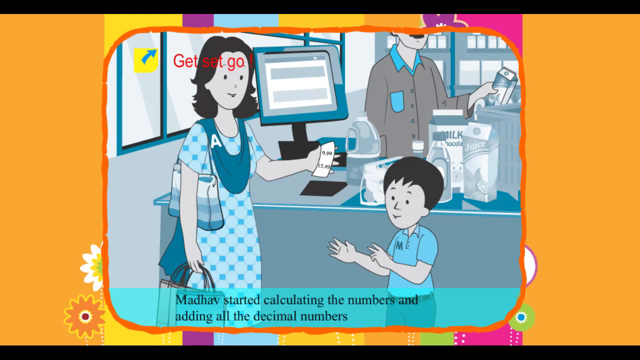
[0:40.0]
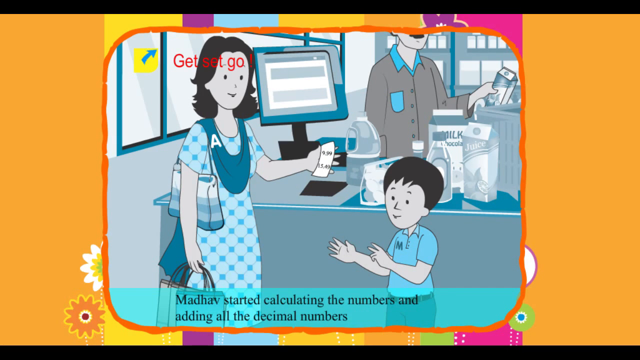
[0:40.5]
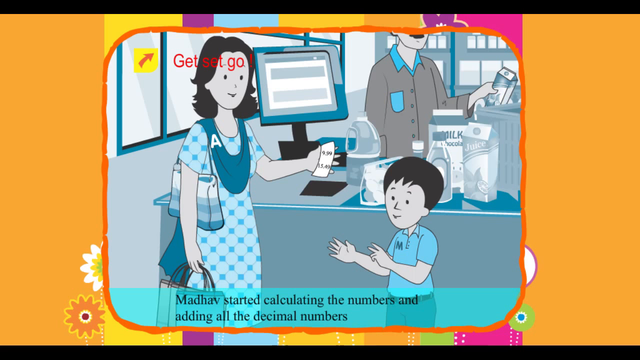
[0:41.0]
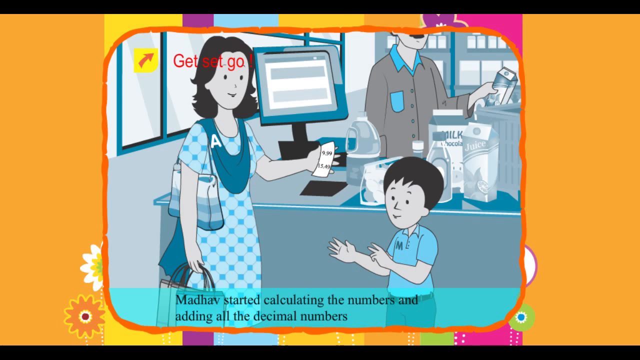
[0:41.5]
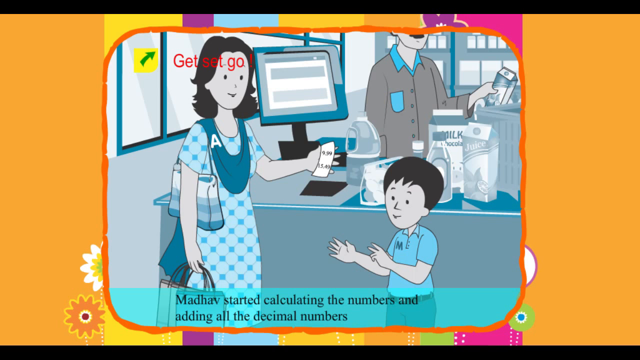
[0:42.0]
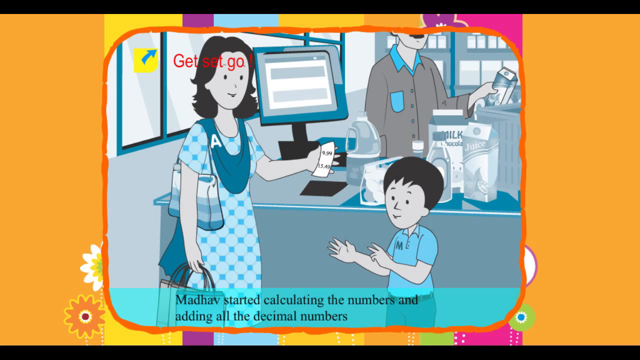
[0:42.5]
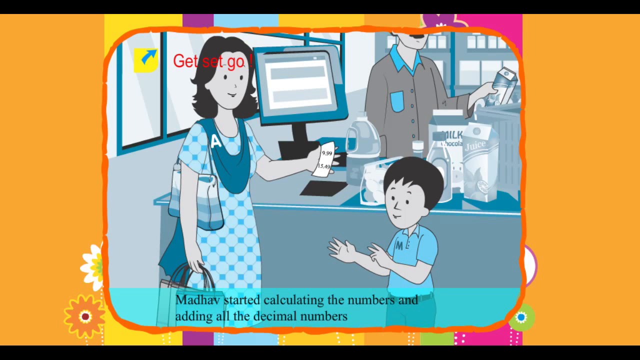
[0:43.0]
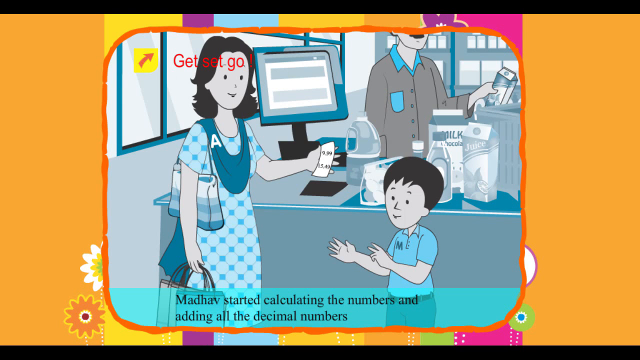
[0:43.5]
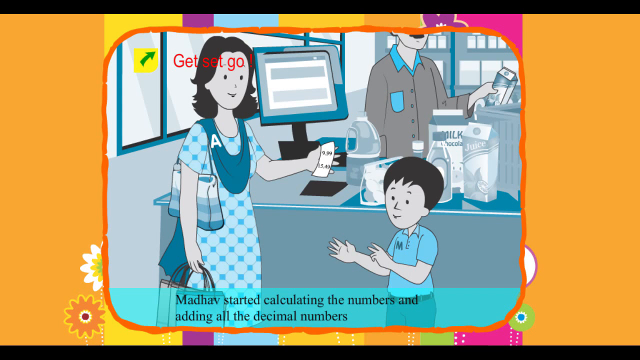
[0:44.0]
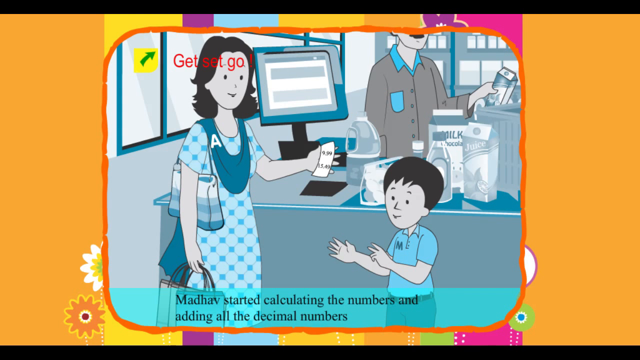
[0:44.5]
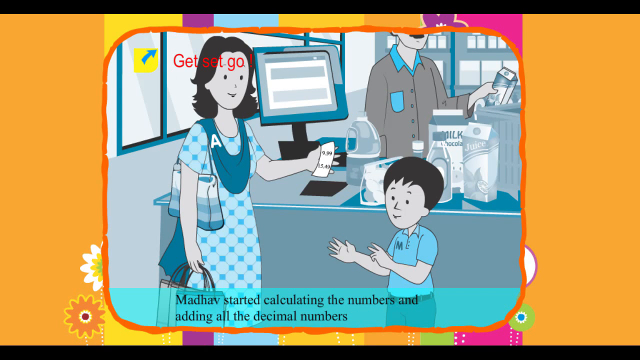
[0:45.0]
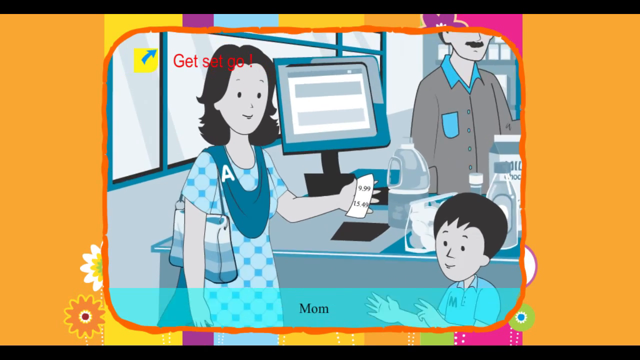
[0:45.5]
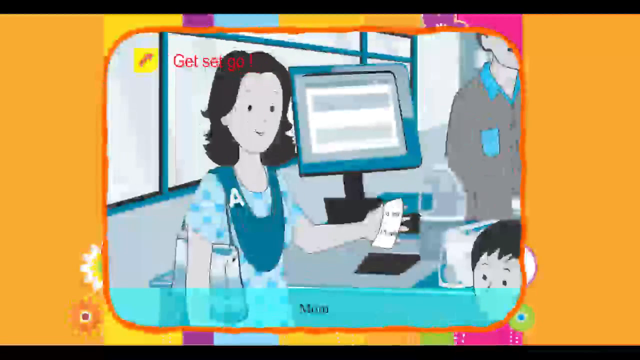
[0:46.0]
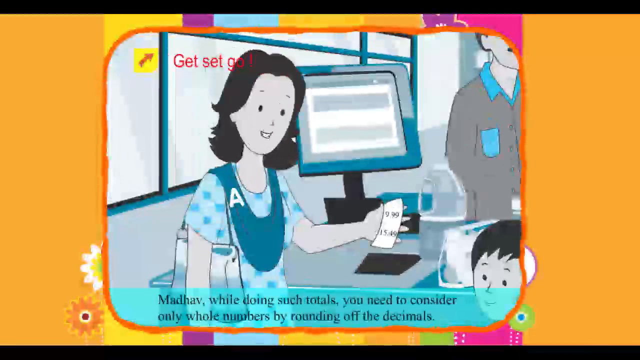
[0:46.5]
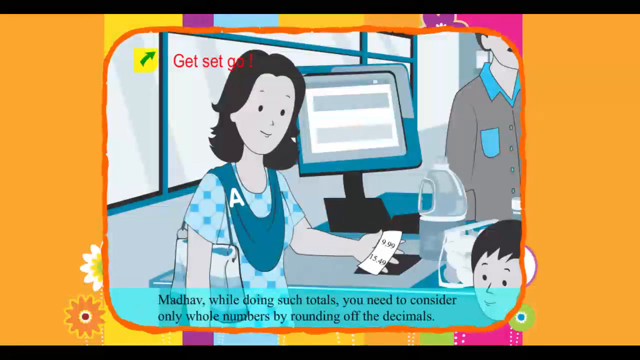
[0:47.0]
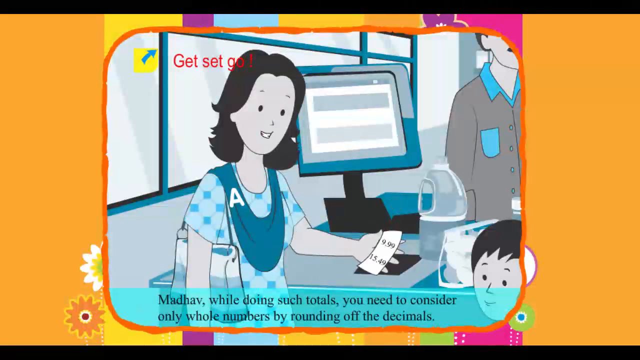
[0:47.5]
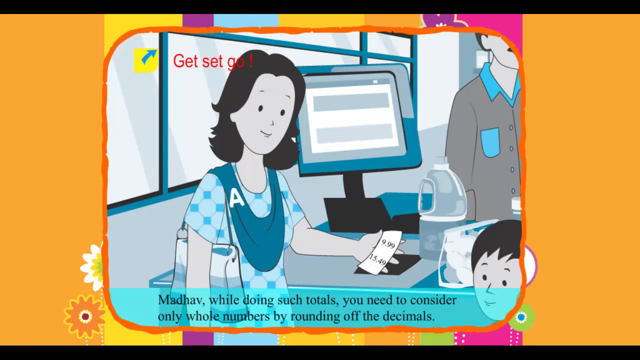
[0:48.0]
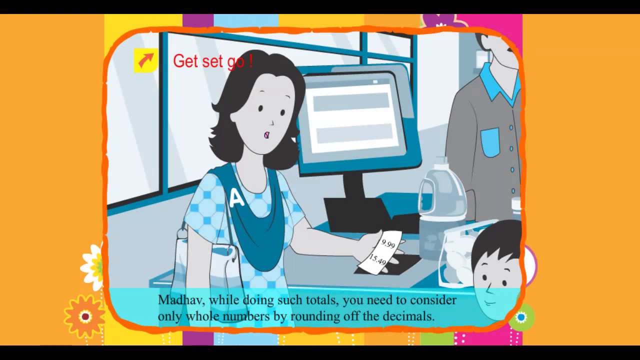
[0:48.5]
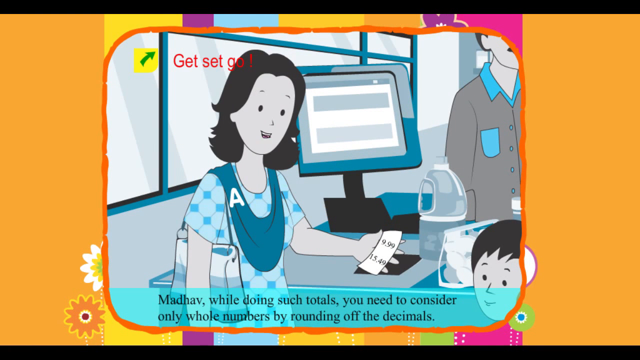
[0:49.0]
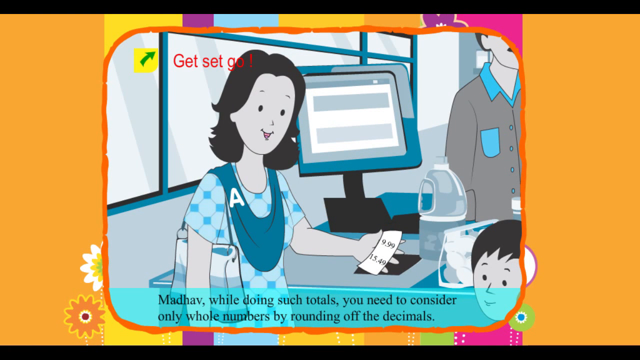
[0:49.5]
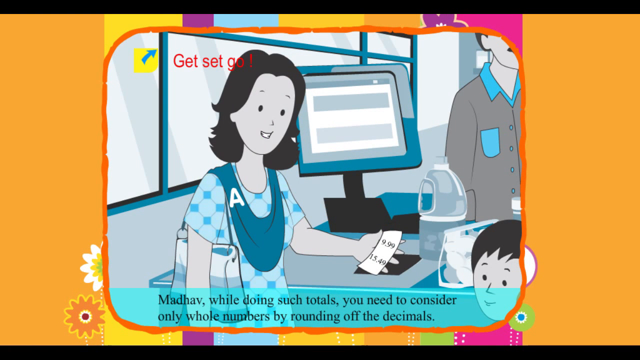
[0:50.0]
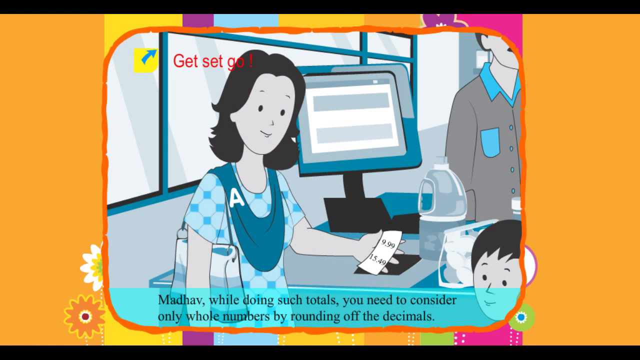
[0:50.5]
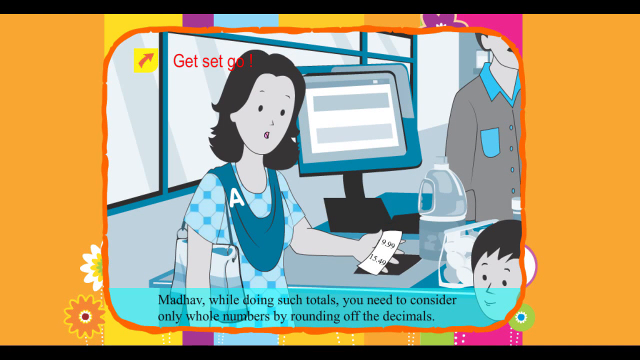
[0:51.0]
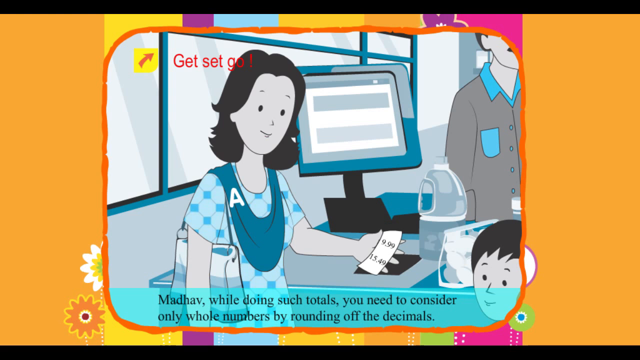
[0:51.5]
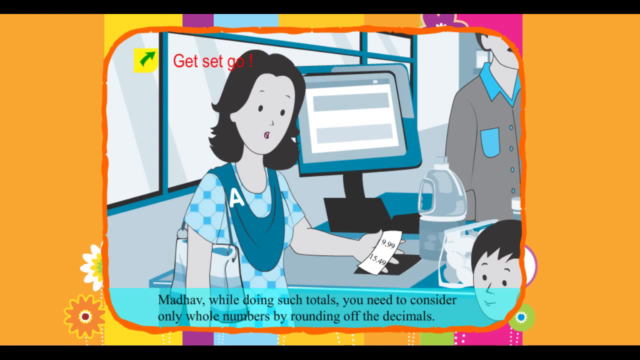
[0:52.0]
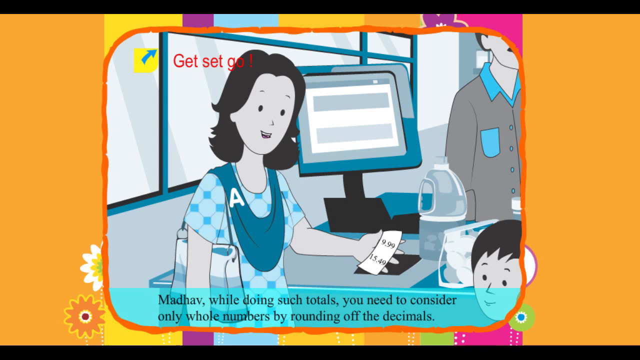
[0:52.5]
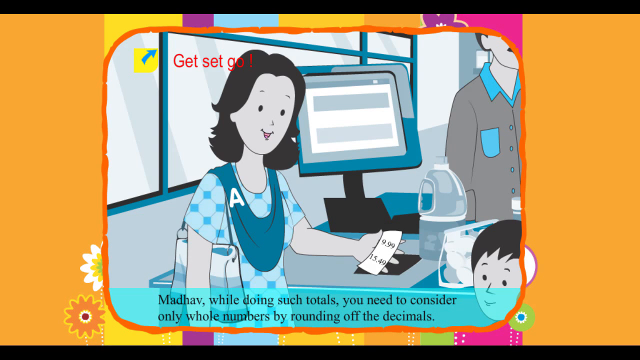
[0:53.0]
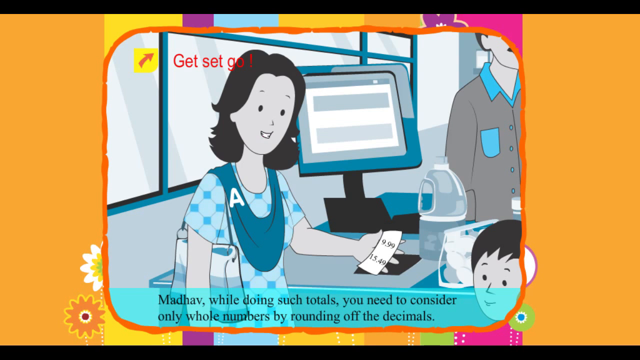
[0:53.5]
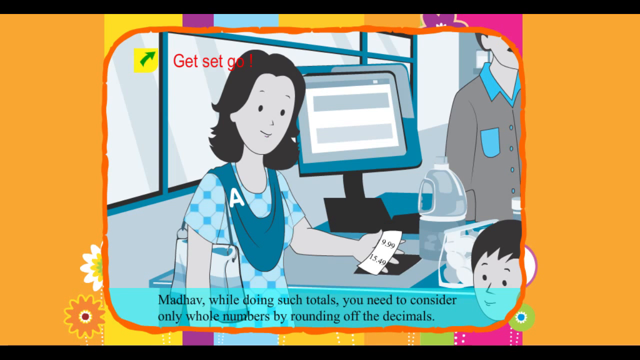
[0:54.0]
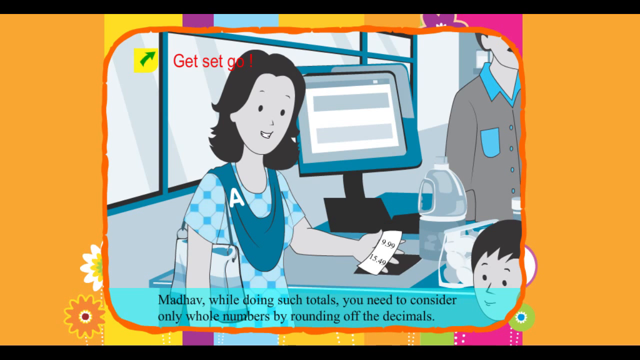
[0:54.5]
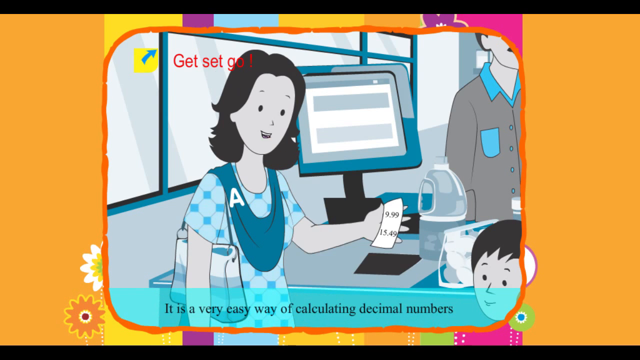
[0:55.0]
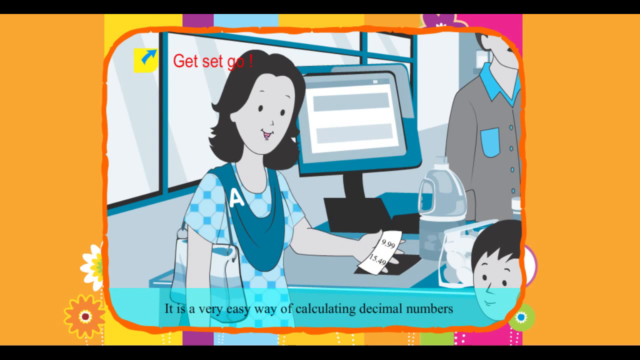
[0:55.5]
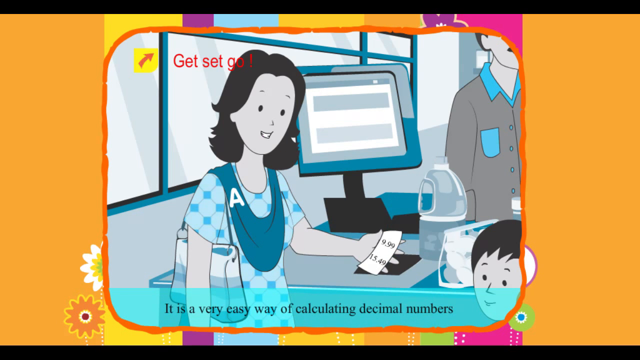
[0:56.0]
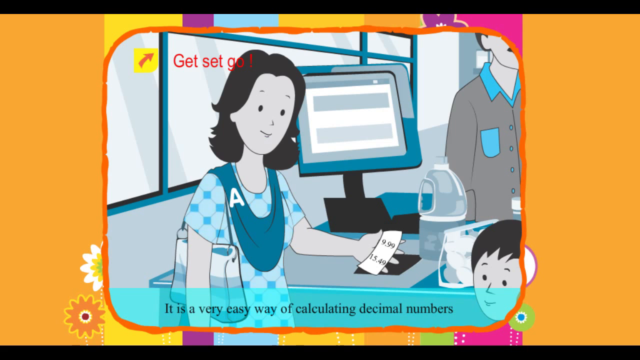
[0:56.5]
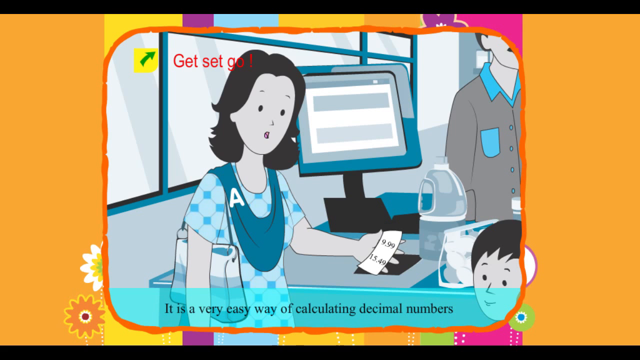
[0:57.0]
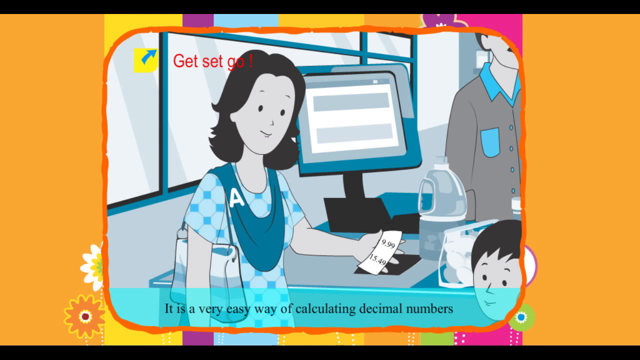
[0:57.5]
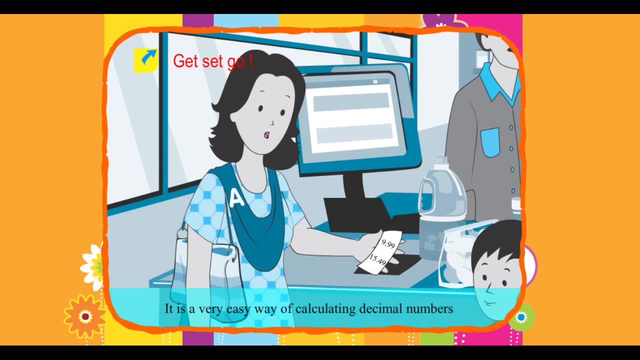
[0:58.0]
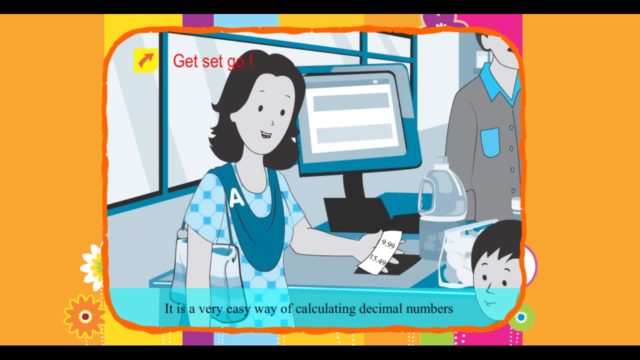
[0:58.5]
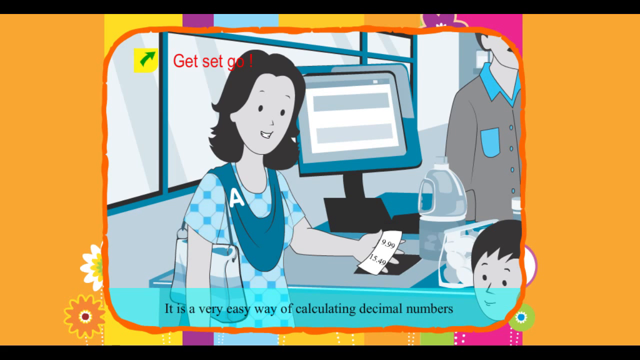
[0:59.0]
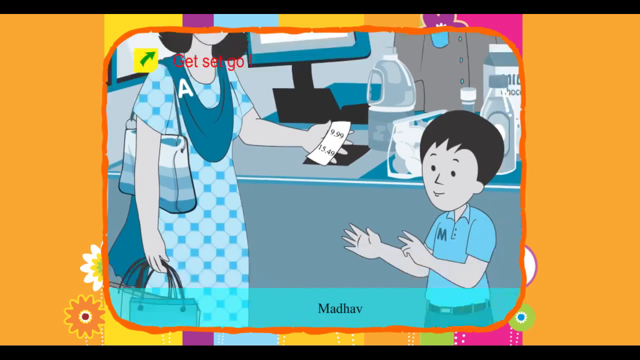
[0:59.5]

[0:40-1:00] In the cartoon, the mother appears to be in a grocery store. In the background, a man looks to be scanning a few items; the branding on two of the items reads "milk chocolates". A computer is also in the background. The mother holds a slip with the numbers 9, 99 and 1449. Next to her is her son, a boy with an M on his shirt. Below, the mother starts calculating, adding up the decimal numbers. The mom speaks to the boy, Madhav, telling him he needs to consider only whole numbers by rounding, before showing him the numbers, and she tells him it is a very easy way of calculating decimal numbers. The scene cuts to the little boy.